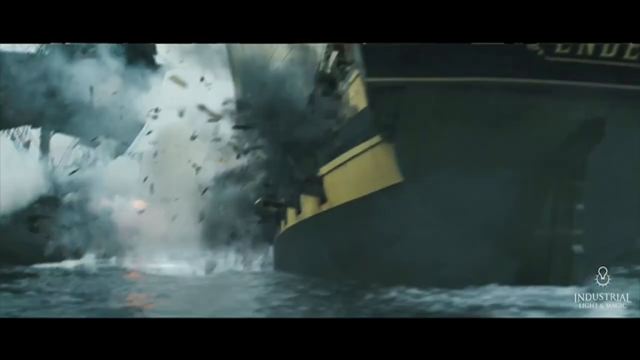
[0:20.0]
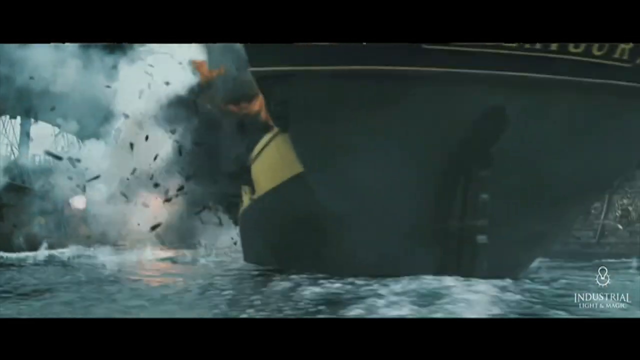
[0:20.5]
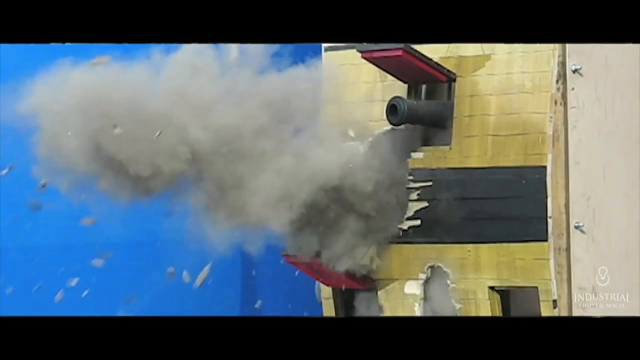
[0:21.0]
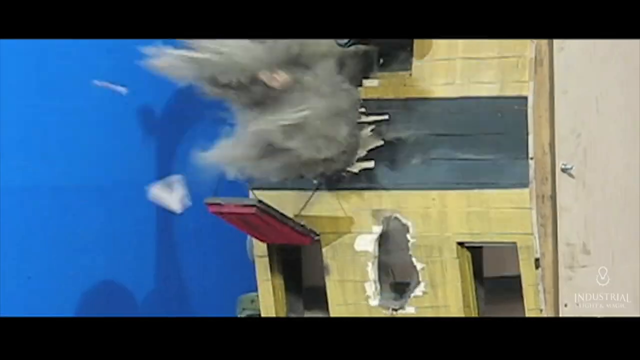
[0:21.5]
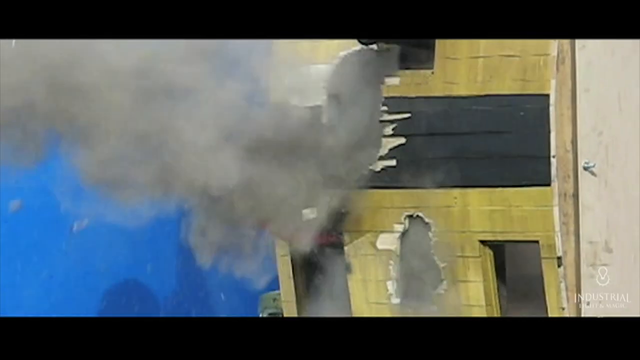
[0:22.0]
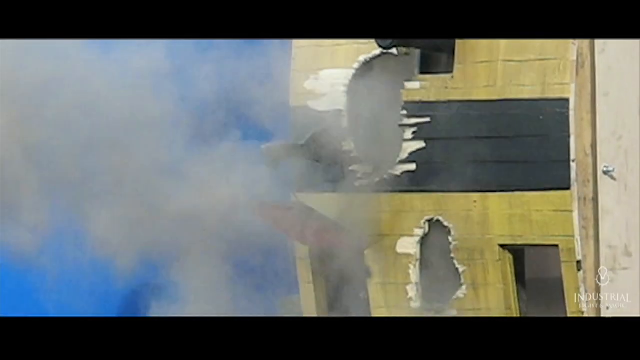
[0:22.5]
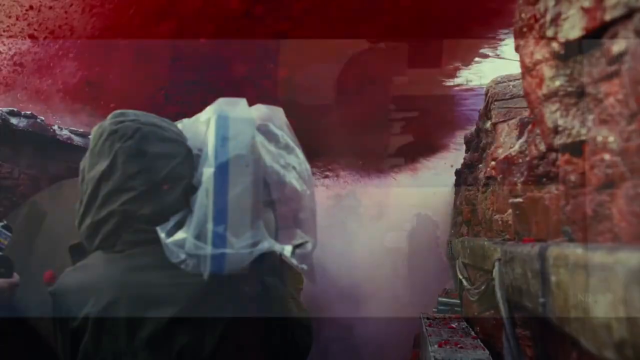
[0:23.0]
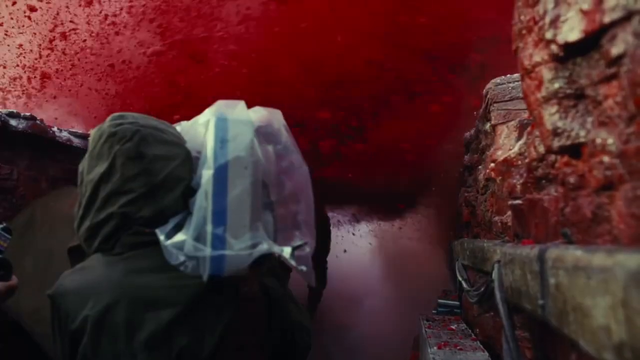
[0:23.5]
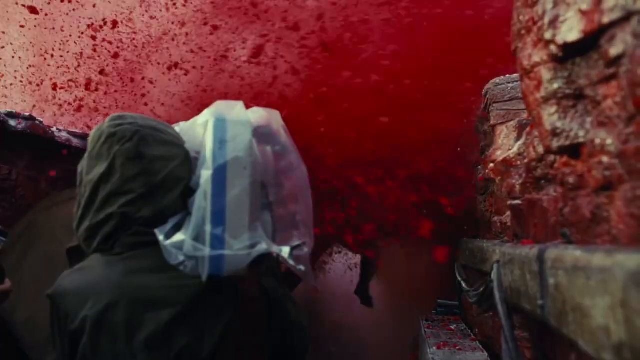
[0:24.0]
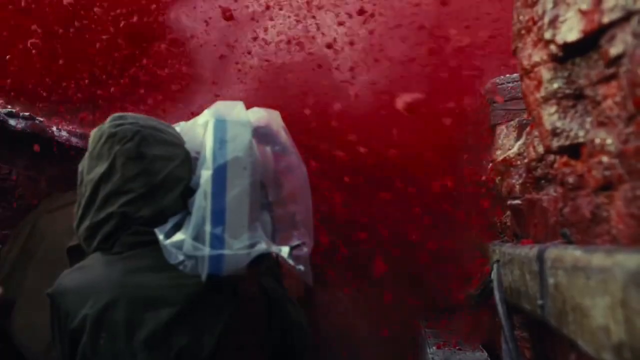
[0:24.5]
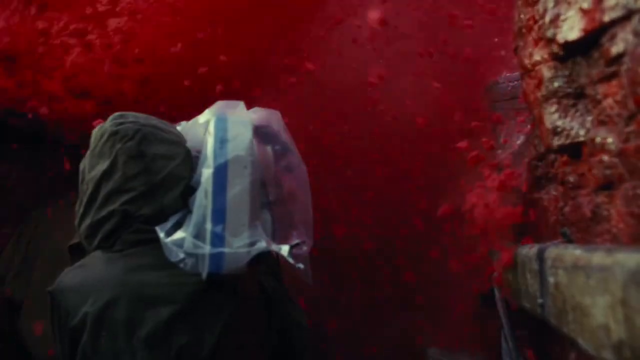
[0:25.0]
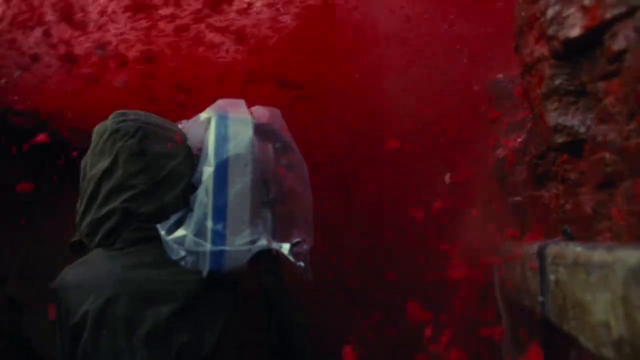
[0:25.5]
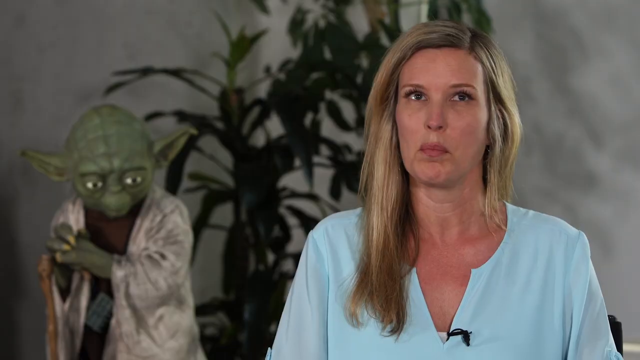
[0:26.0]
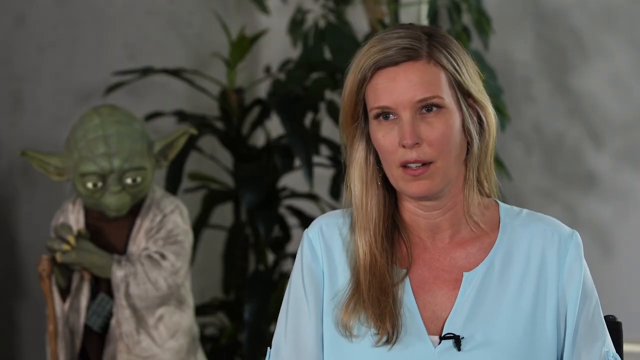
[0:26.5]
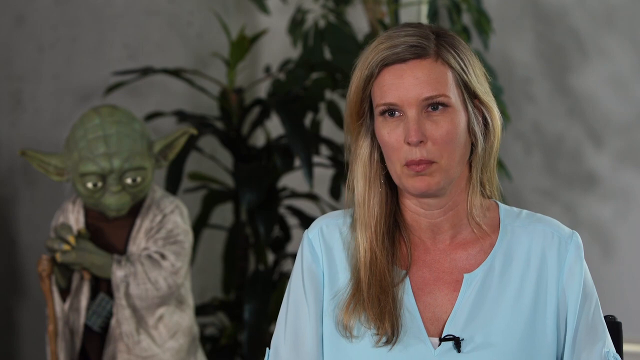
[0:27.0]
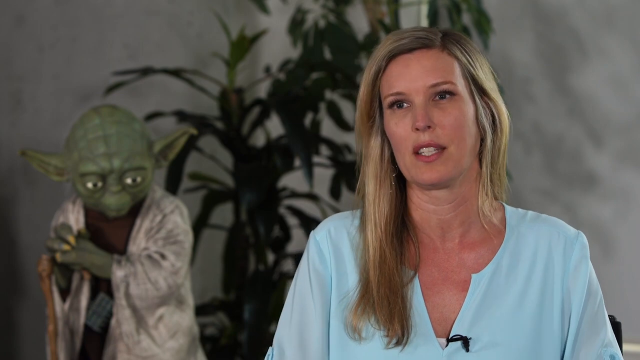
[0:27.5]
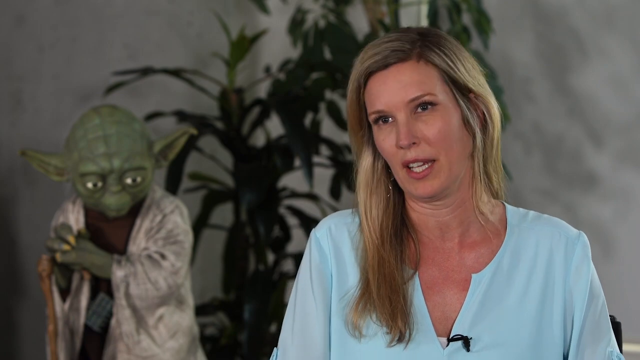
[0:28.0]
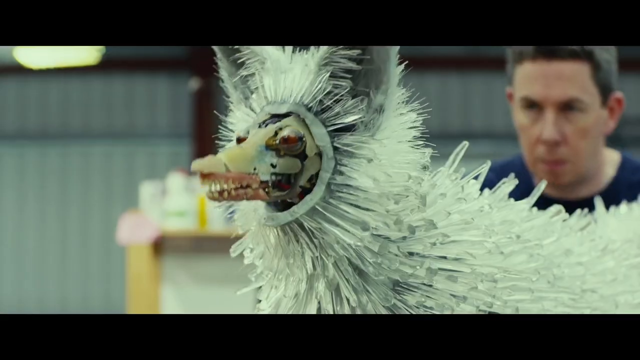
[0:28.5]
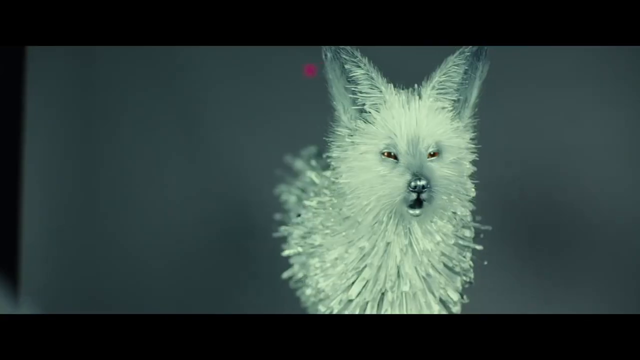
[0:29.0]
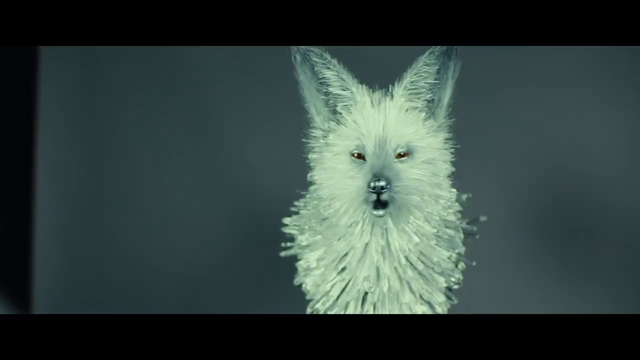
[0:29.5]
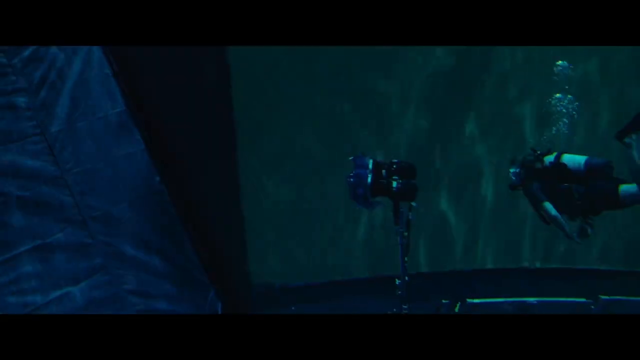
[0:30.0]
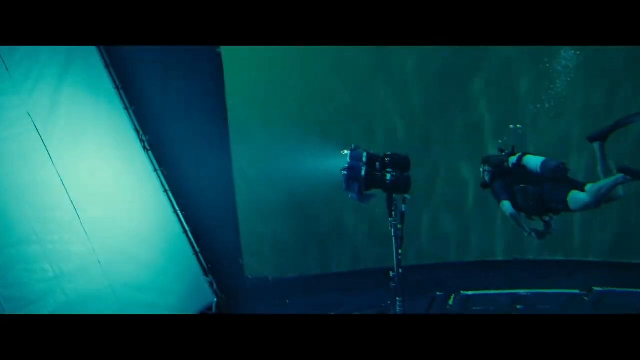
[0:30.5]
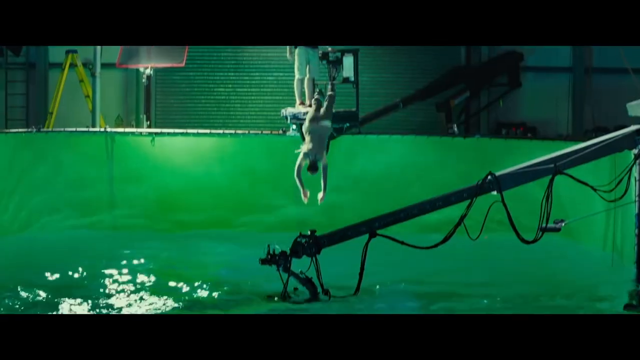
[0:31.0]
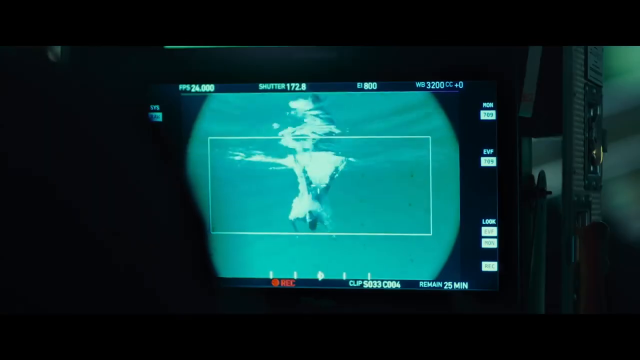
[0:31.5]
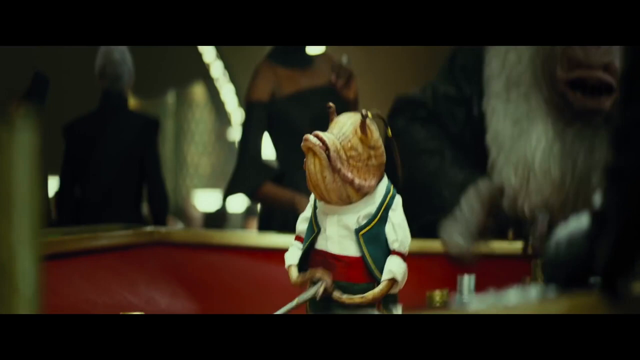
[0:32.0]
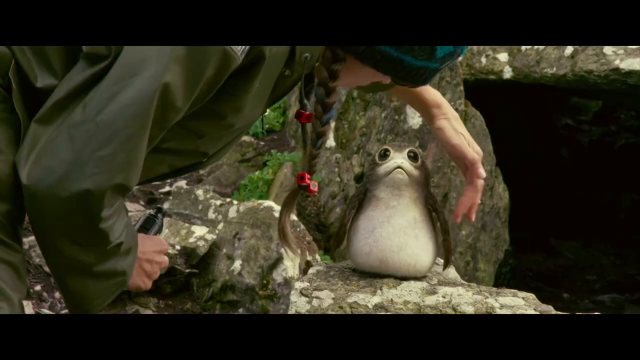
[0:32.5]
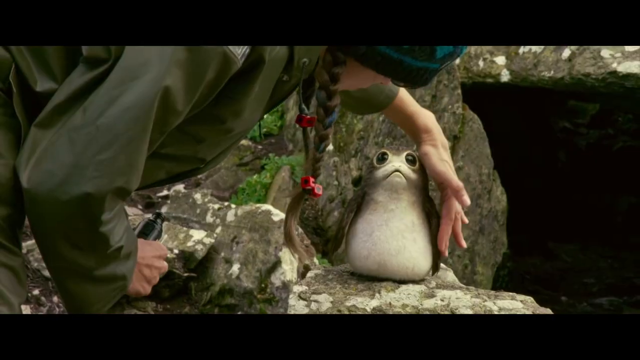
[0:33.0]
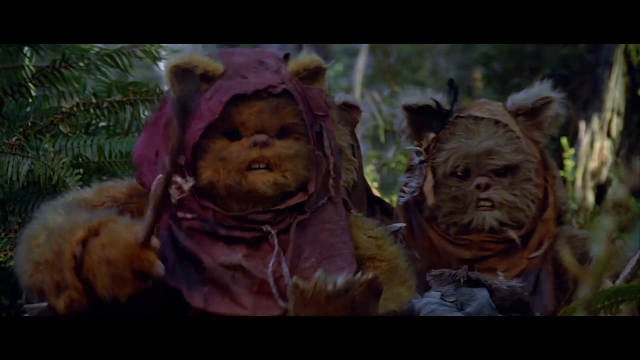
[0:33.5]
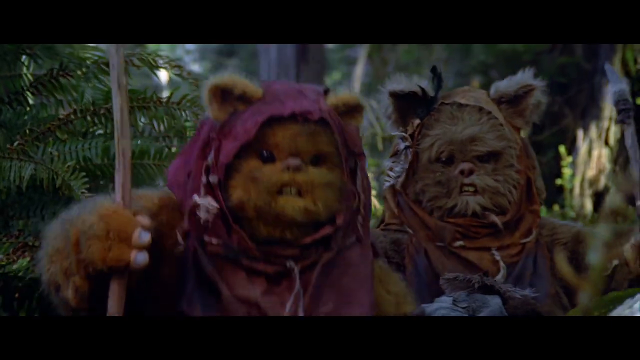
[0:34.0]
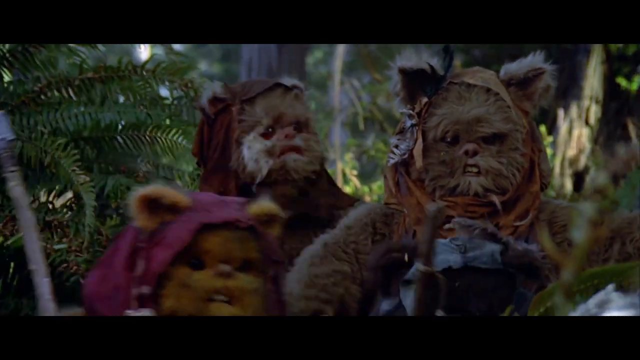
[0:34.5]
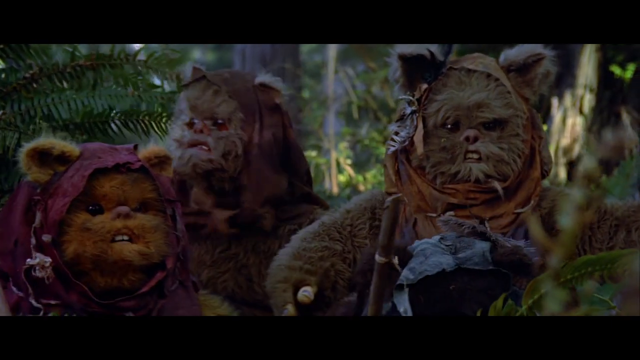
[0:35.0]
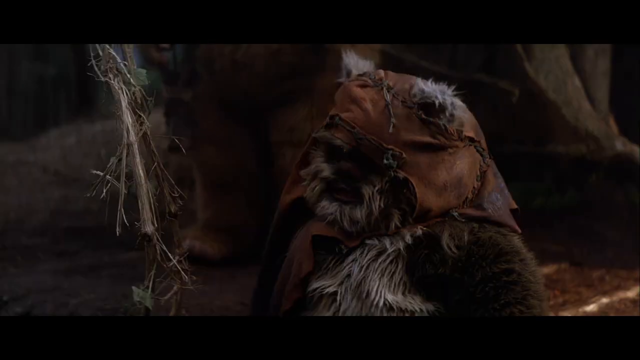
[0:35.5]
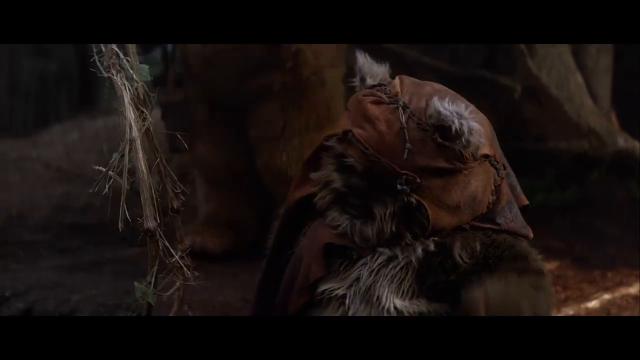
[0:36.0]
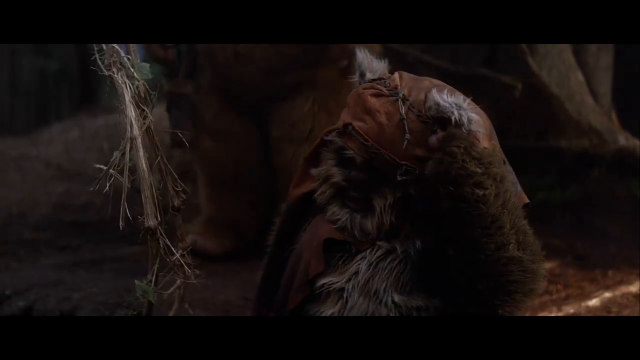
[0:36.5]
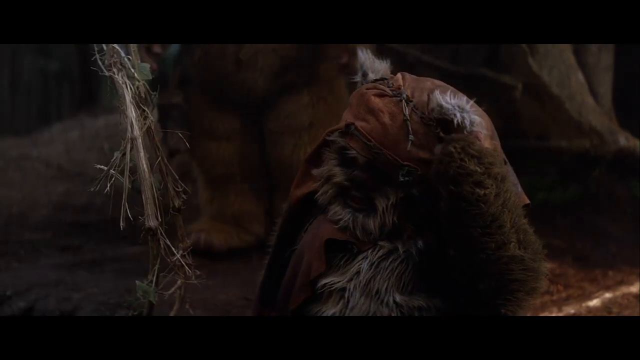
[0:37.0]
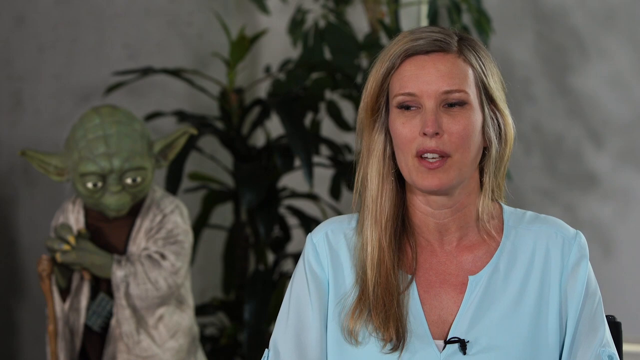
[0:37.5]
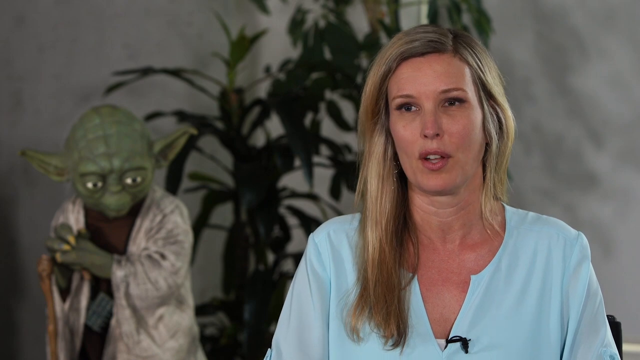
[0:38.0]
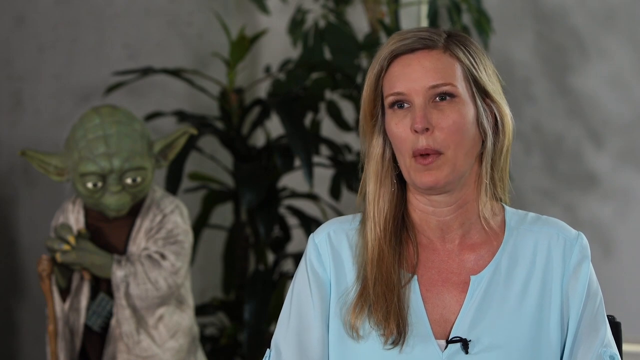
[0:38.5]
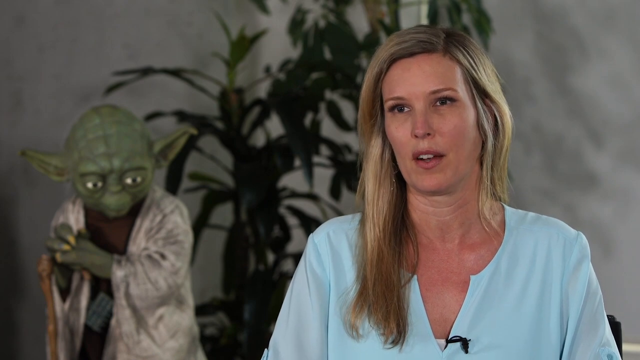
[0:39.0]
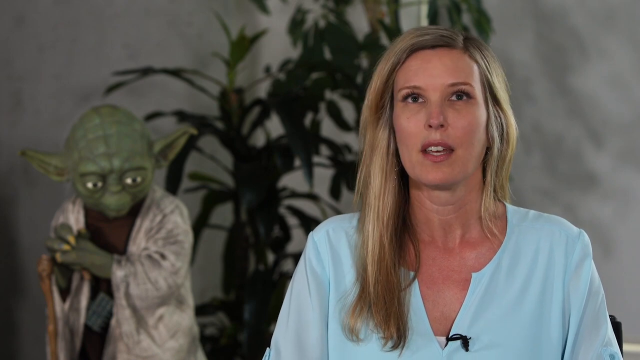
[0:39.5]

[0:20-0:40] A scene shows pirate ships battling, possibly from Pirates of the Caribbean or another movie. The video shows how creatures are made, how underwater scenes are done, and how the Ewoks from Return of the Jedi were made. A woman in a blue shirt talks; she is apparently a supervisor for special effects. A ship in a battle on the water is made in front of a blue screen, not a green screen. A wolf is shown that was made from a chicken head with fur around it, apparently with the chicken replaced by the wolf head. Different shots from different movies are shown as they were made in the studio compared with how they look on screen.